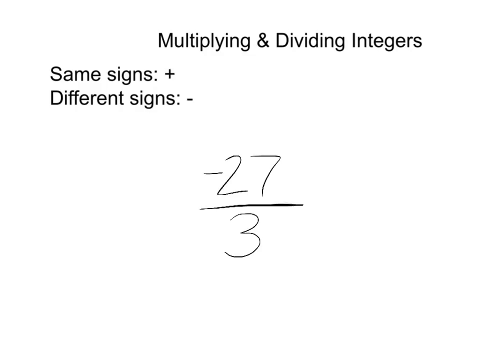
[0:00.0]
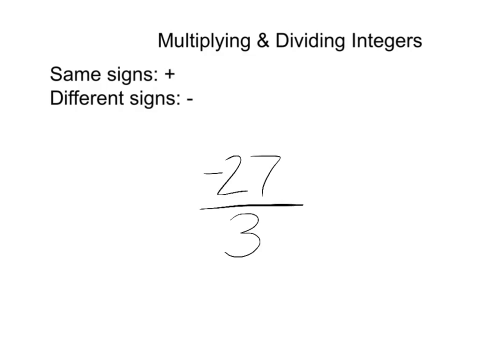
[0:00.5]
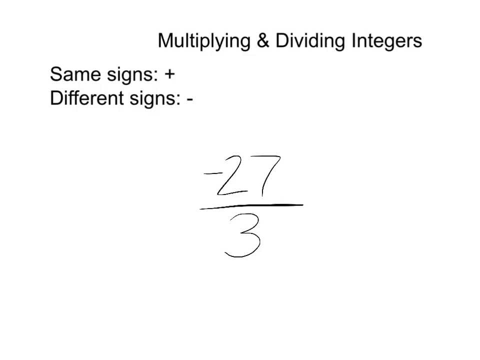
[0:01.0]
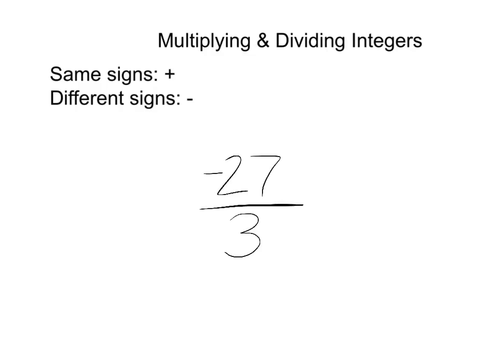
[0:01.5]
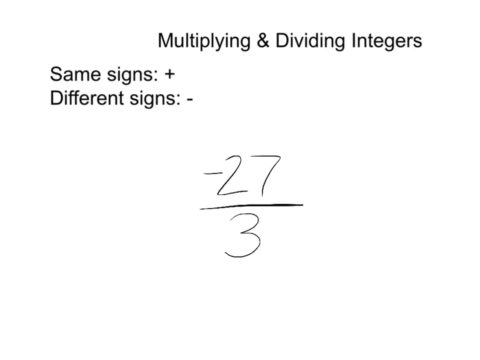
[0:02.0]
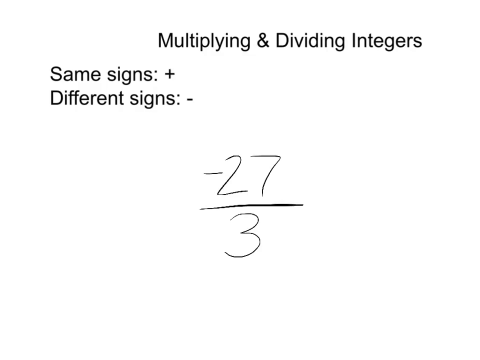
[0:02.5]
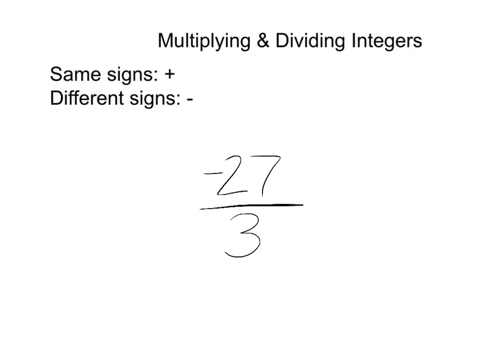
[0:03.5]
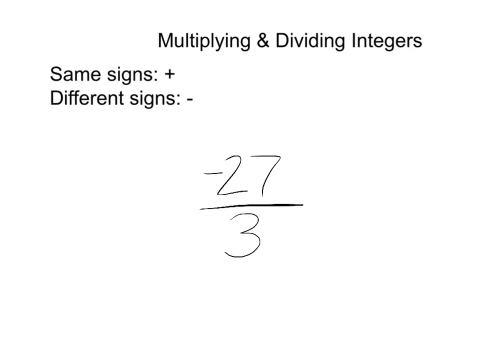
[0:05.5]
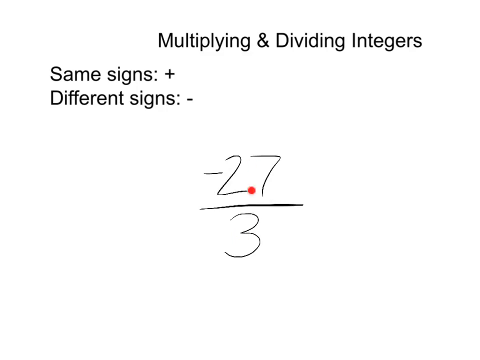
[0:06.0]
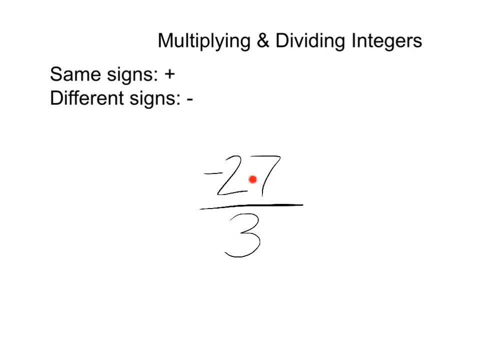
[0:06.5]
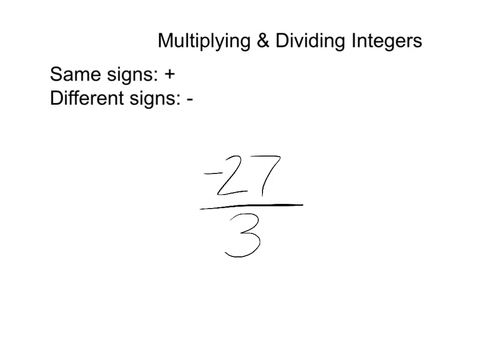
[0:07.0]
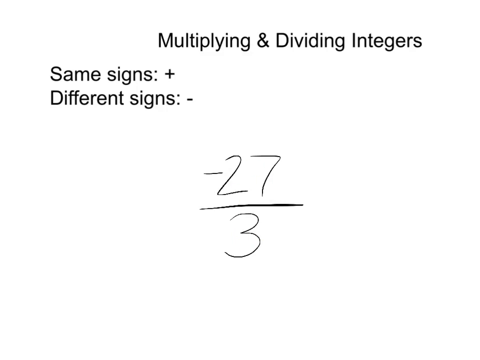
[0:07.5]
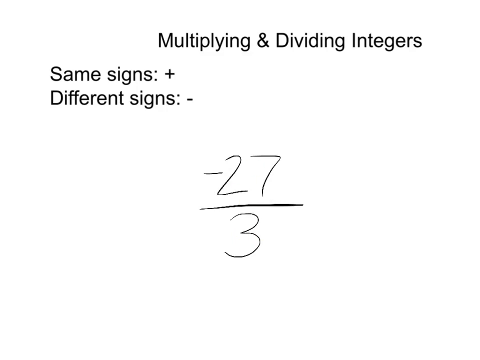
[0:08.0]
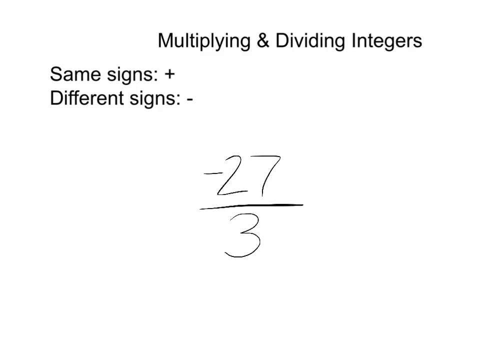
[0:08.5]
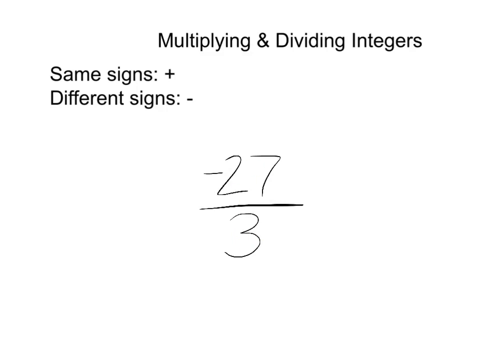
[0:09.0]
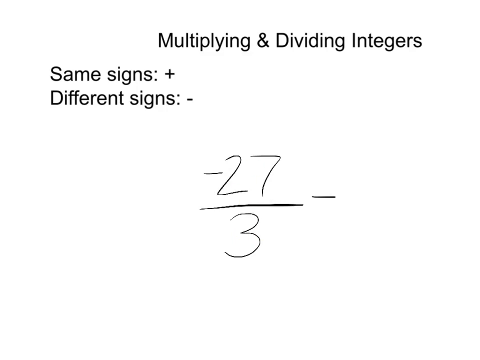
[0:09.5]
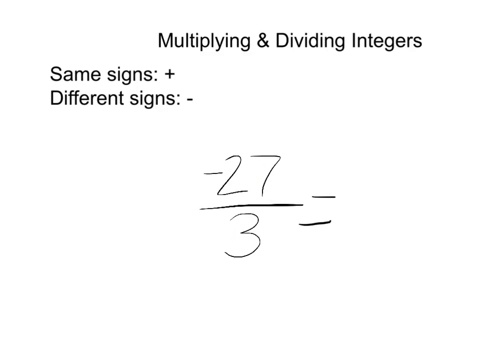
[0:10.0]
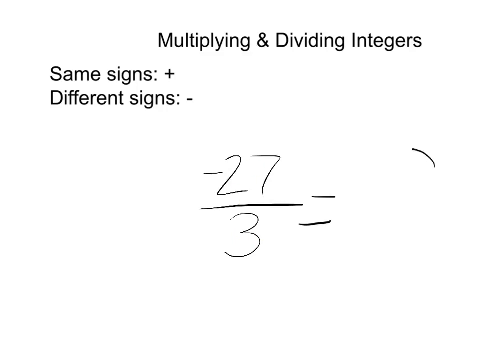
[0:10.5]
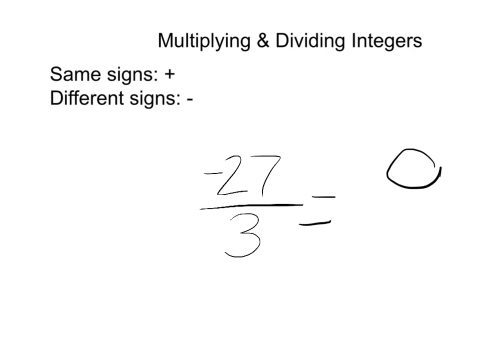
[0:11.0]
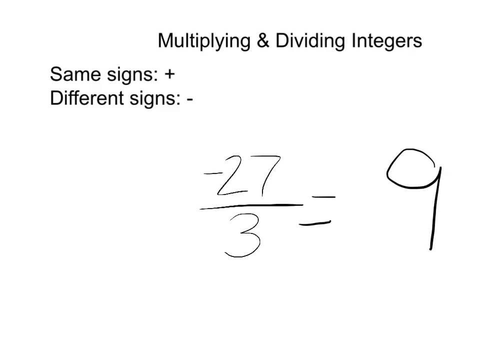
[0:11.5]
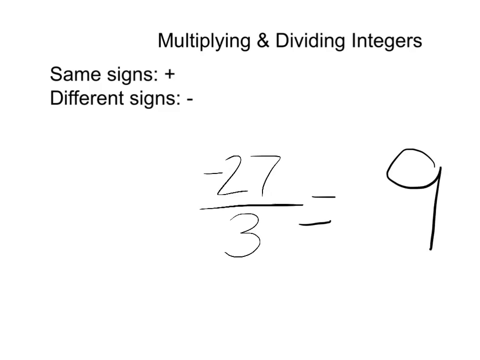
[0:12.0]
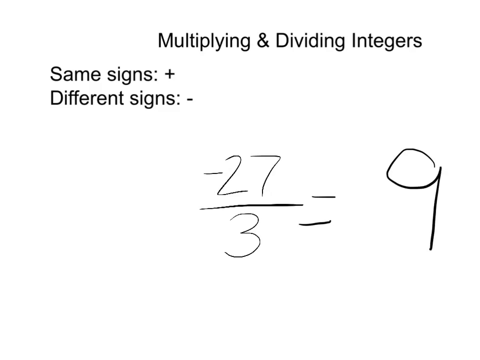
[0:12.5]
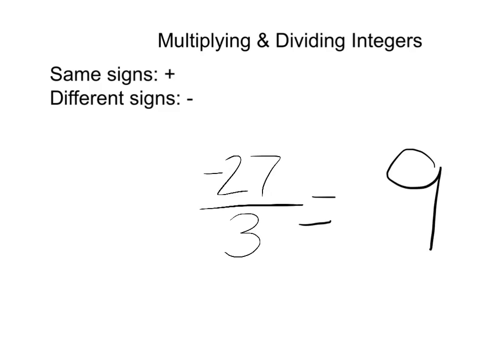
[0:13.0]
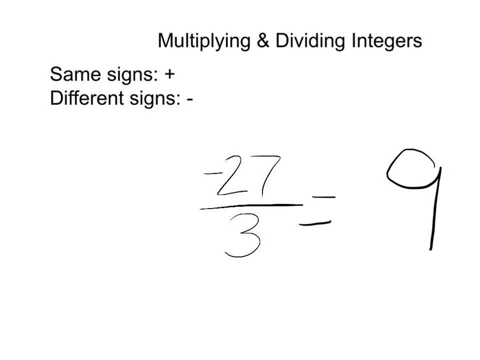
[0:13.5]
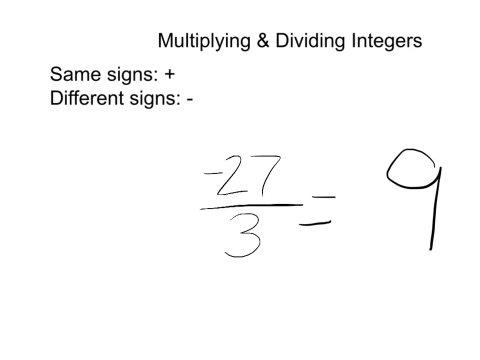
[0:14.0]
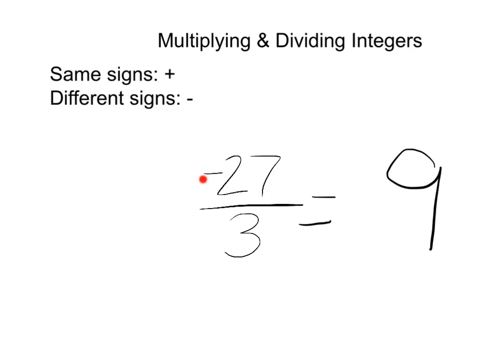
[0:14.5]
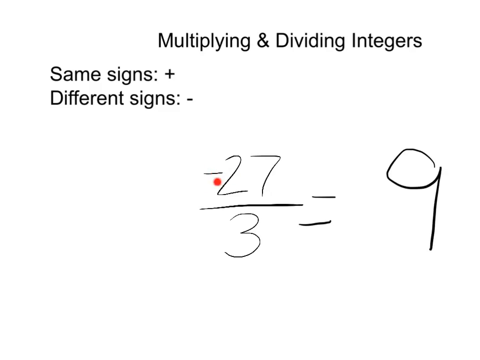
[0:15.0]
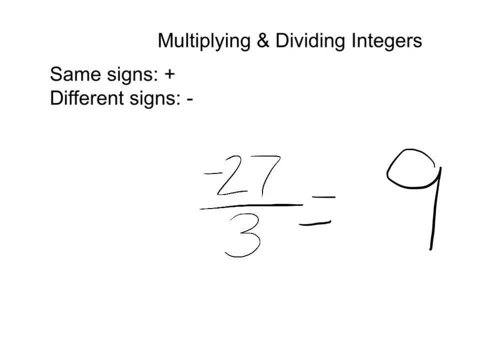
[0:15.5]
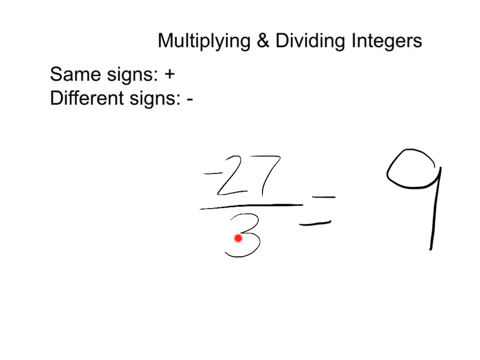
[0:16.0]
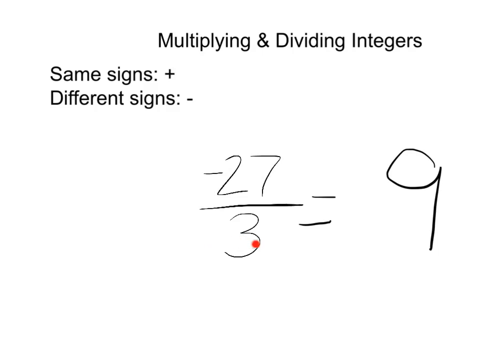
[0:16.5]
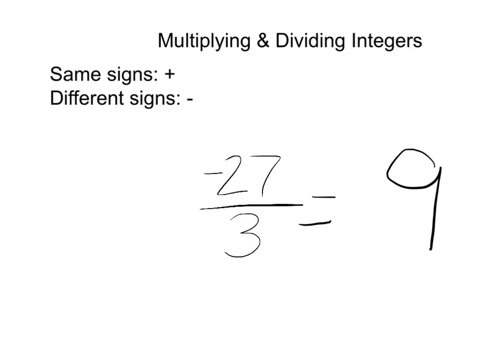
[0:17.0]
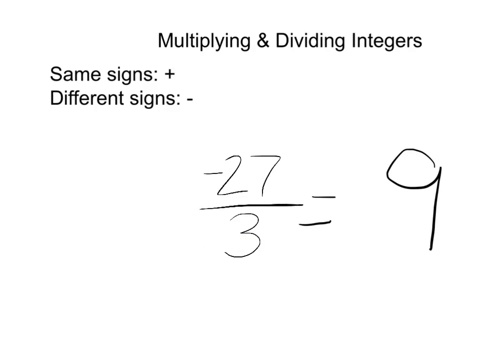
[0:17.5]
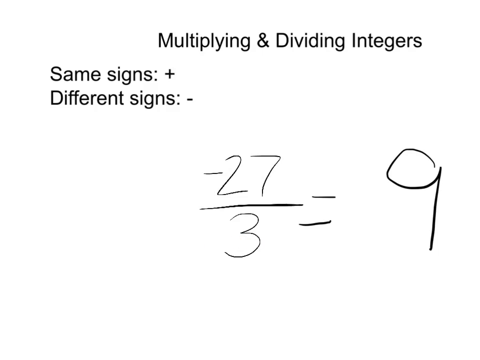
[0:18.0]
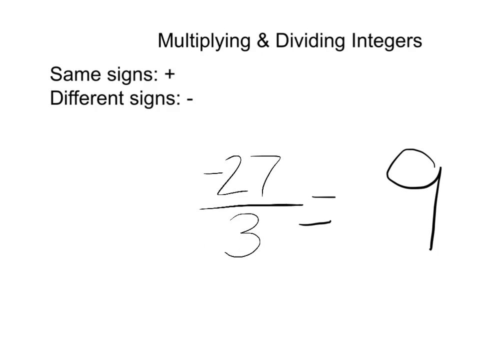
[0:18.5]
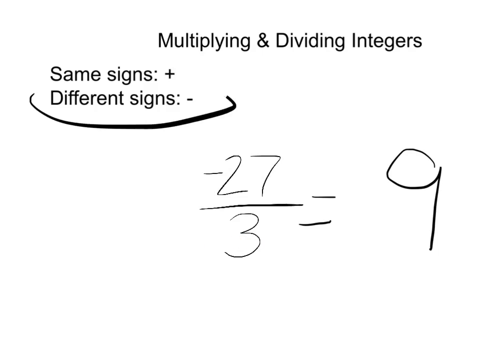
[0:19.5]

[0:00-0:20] Against a white background, black typed text reads "Multiplying and Dividing Integers." The text seems to be bold, with capitalized initial letters. To the left below it, "Same signs" appears followed by a plus sign, and under that "Different signs" followed by a minus sign. What looks like a handwritten fraction appears: negative 27 over 3. A red circle mouse pointer comes onto the screen, and an equal sign is added next to the fraction, followed by a 9. The red circle then seems to highlight the negative 27 and then the 3, and "Different signs" is circled.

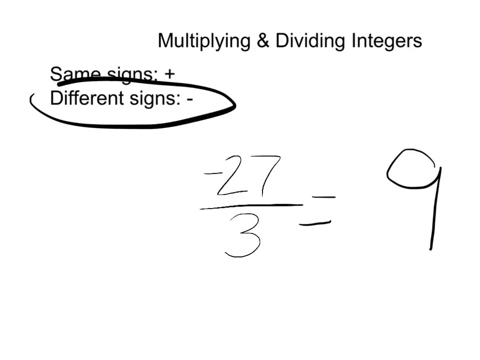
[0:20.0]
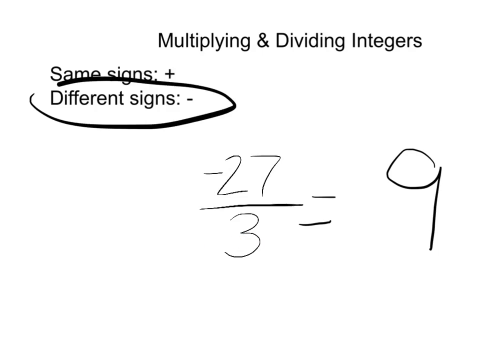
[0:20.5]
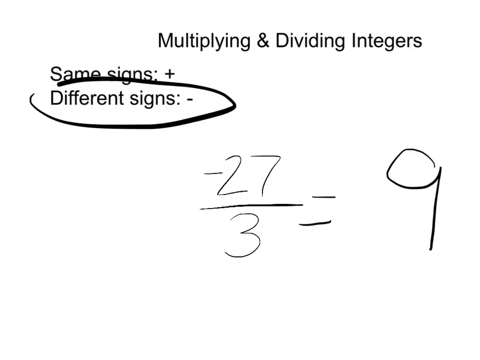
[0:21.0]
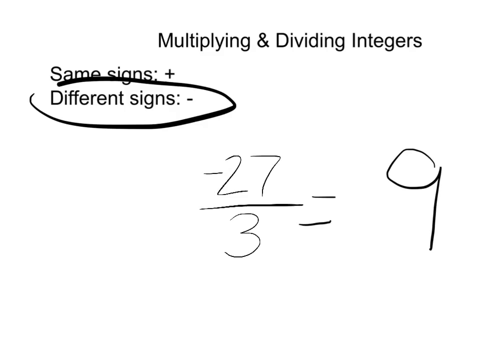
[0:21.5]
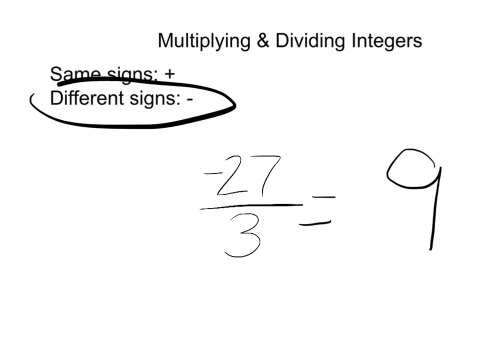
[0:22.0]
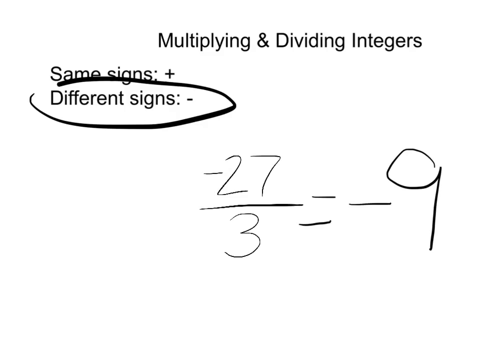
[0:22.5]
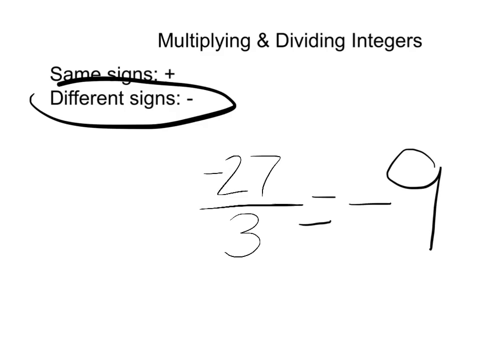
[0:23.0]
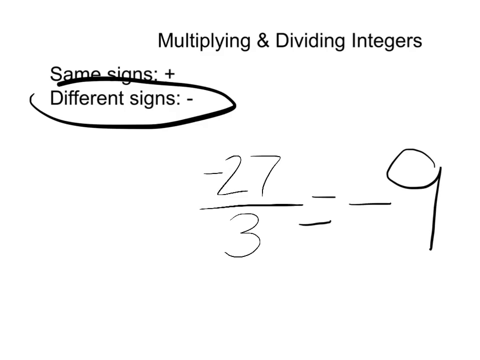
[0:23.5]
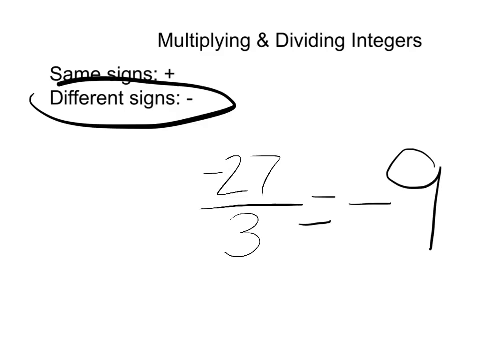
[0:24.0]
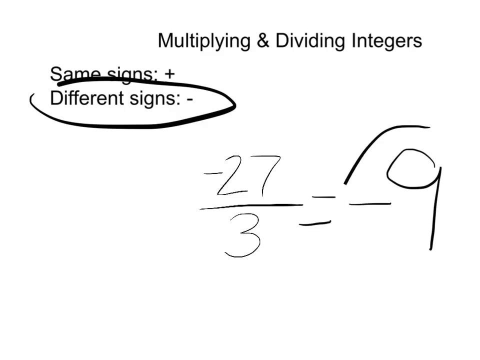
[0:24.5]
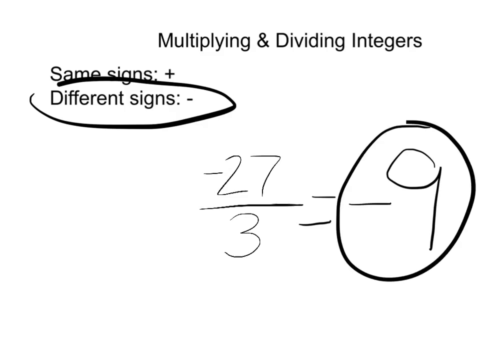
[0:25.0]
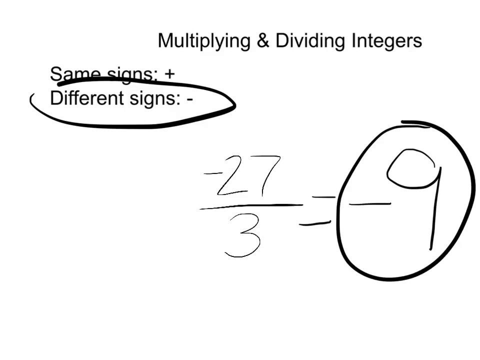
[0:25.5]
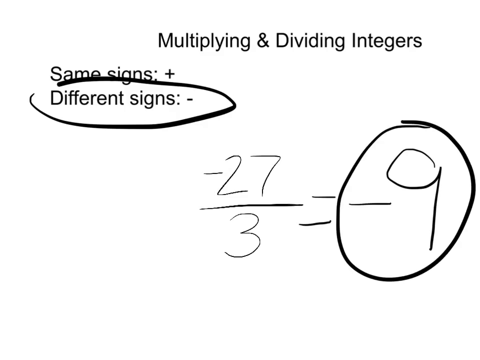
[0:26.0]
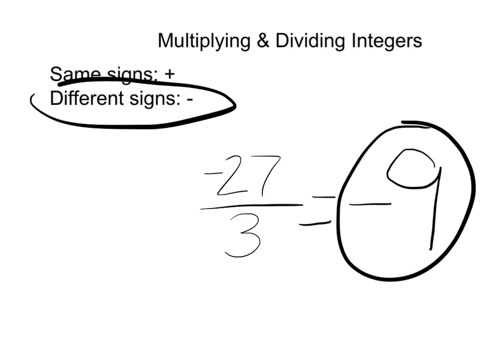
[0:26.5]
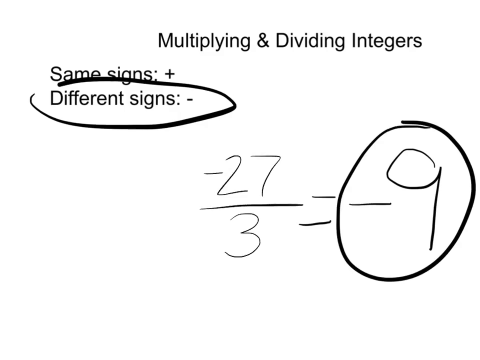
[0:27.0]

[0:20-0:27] Typed and centered on the screen is "Multiplying and dividing integers." Below it is typed "Same signs" with a two-dot symbol and a plus sign, and under that "Different signs" with a two-dot symbol and a minus sign; a circle has been drawn around "Different signs." In the middle, the fraction negative 27 over 3 is written out, followed by "equals 9." A negative sign is drawn in front of the 9, and the negative 9 is then circled.